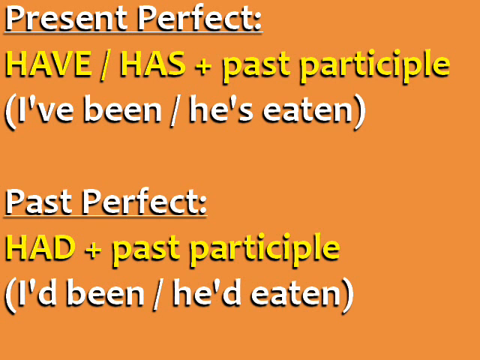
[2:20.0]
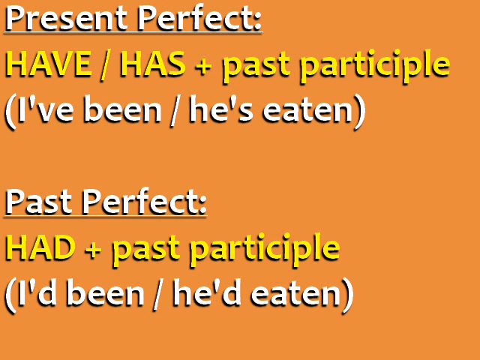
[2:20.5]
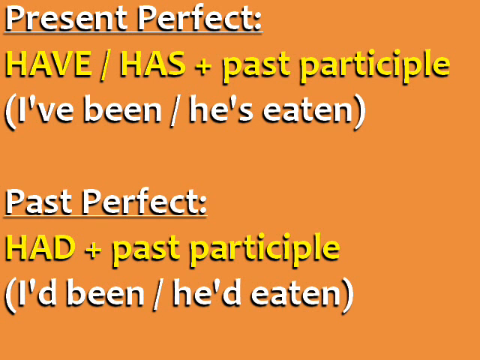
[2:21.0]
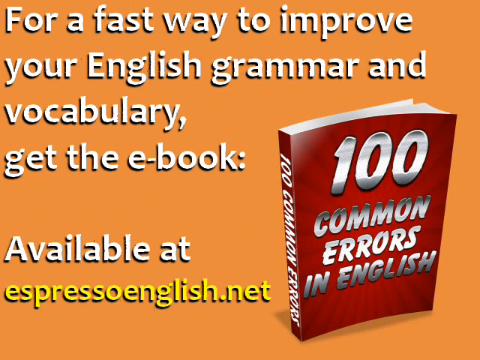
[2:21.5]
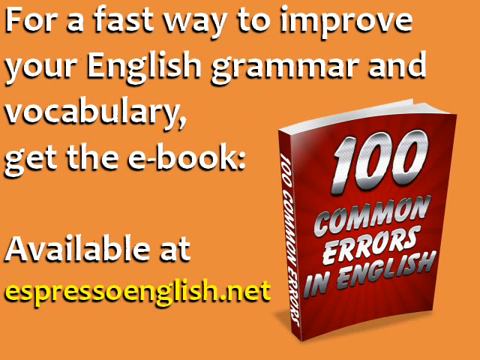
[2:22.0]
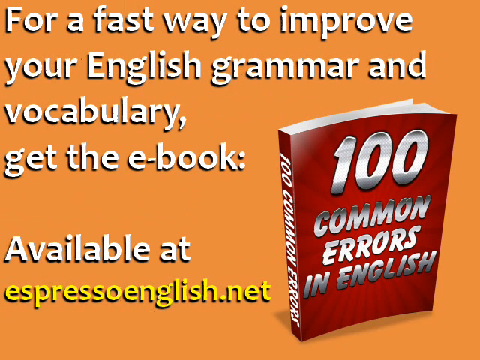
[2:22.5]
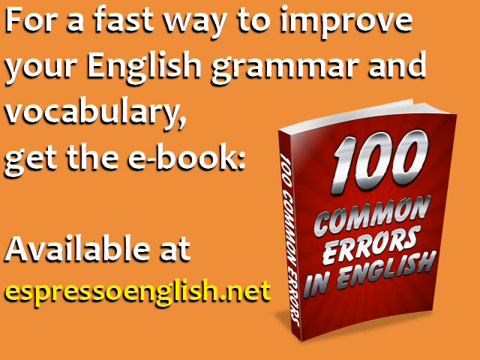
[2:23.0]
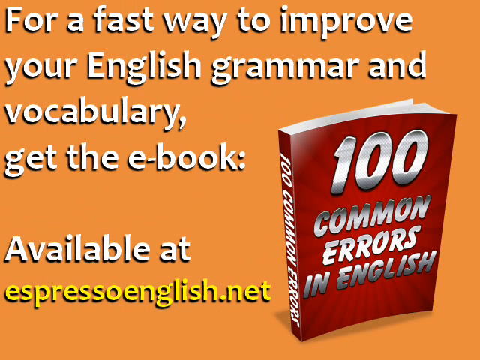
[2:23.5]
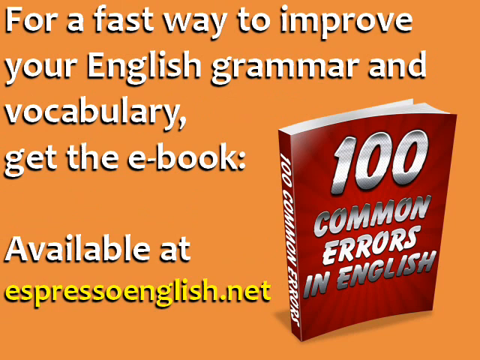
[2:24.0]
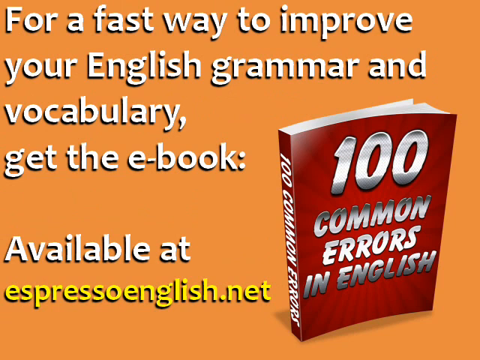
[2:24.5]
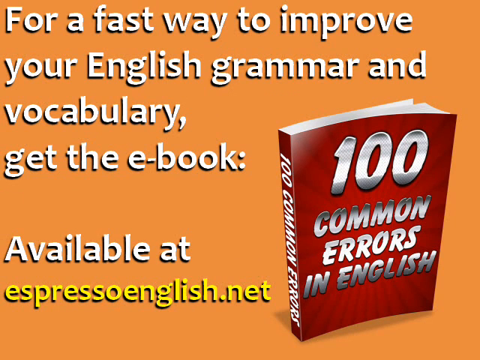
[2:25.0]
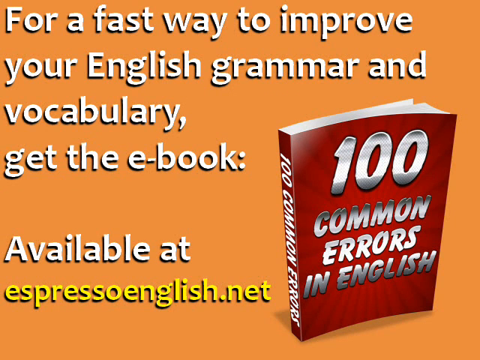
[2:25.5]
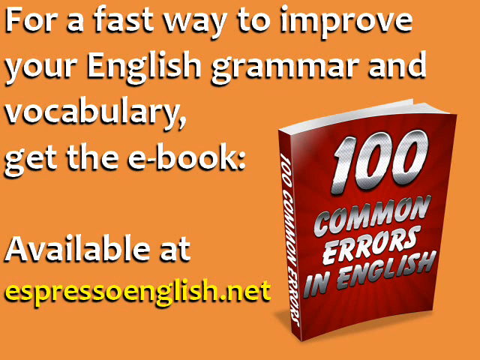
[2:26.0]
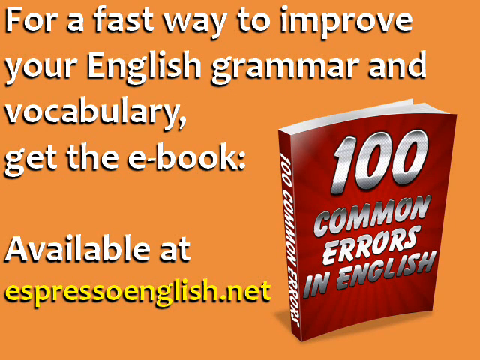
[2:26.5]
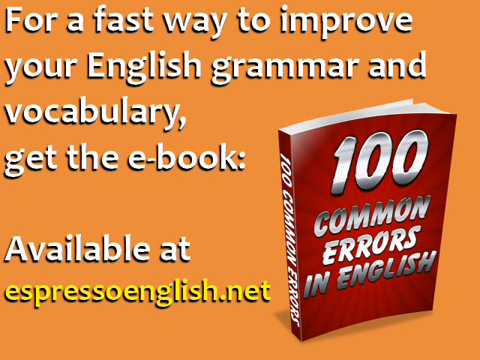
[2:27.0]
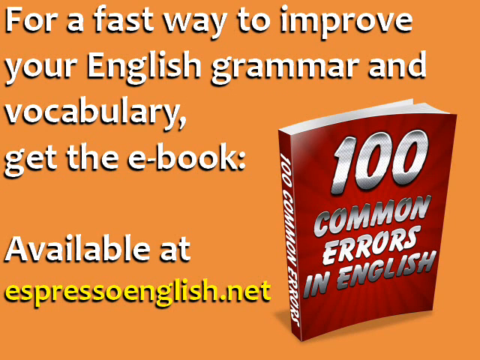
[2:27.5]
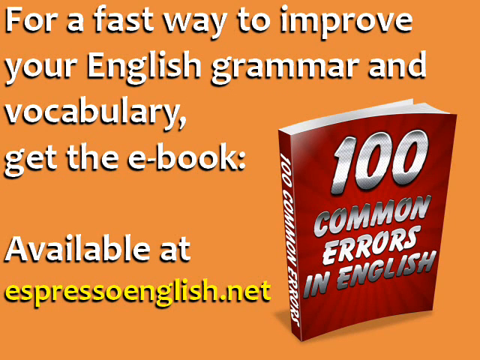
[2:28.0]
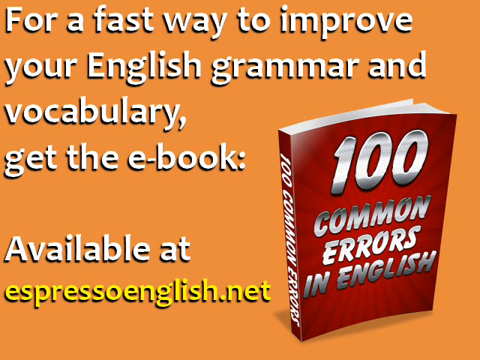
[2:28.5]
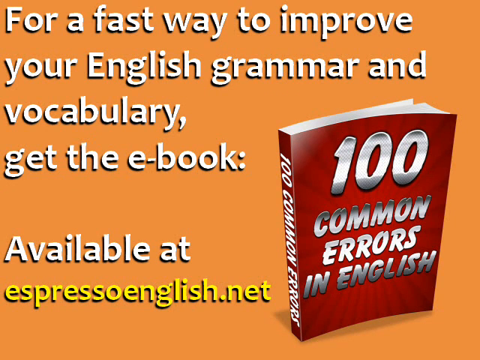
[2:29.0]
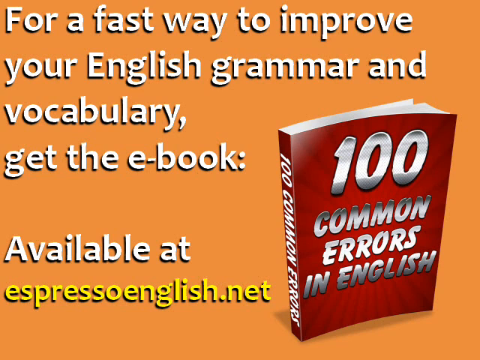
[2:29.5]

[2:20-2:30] After the tense examples, text appears, apparently an explanation, saying "for a fast way to improve your English grammar and vocabulary, get the e-book" and that it is available at "espressoenglish.net." The book is displayed with a red cover, and on top of it is written "100 common errors in English."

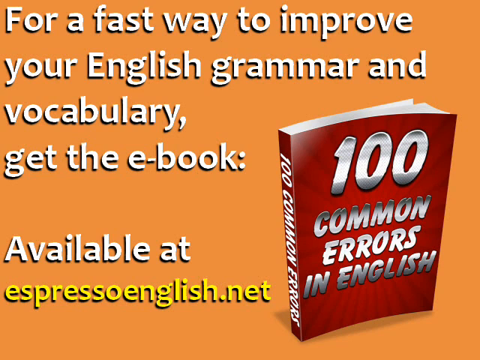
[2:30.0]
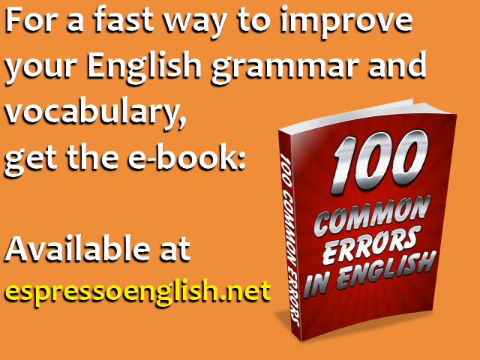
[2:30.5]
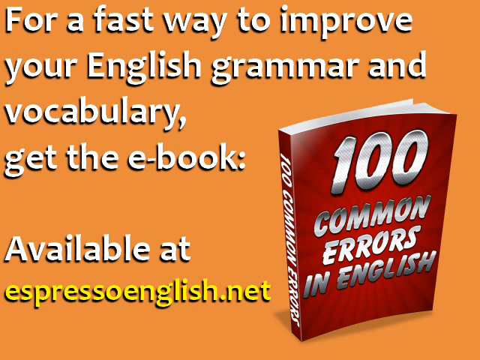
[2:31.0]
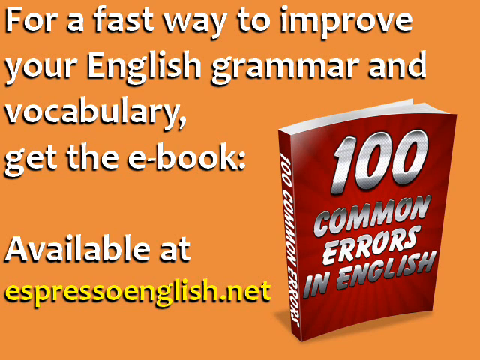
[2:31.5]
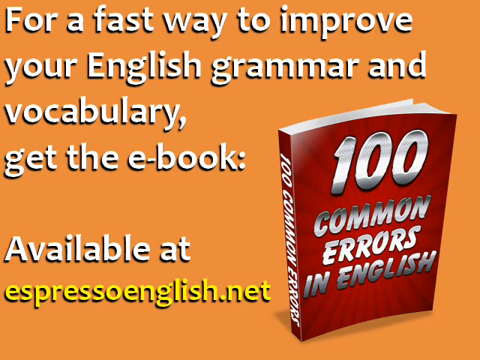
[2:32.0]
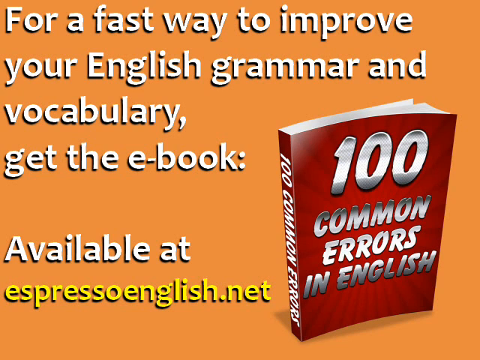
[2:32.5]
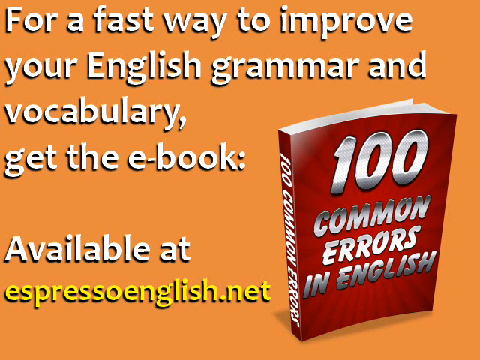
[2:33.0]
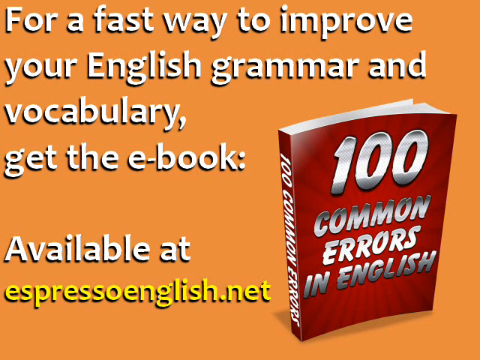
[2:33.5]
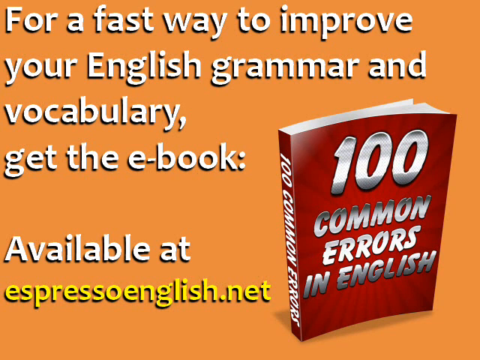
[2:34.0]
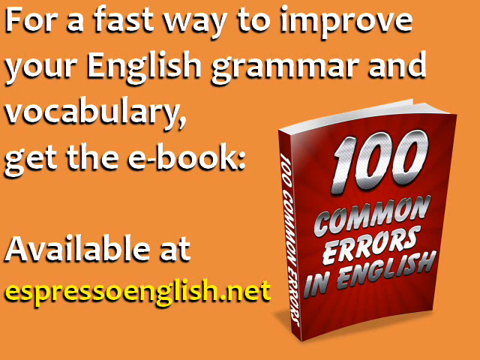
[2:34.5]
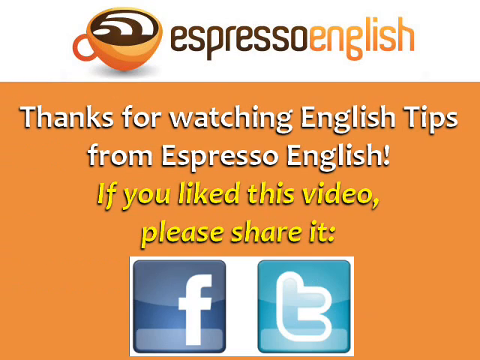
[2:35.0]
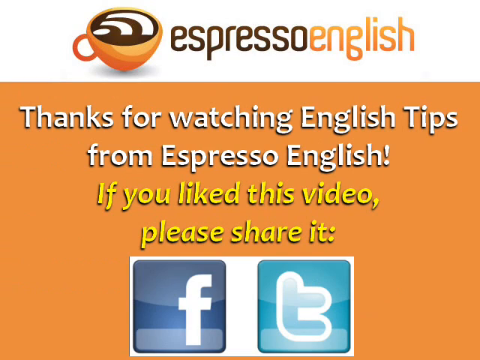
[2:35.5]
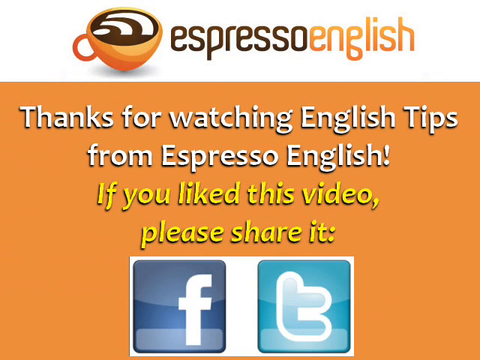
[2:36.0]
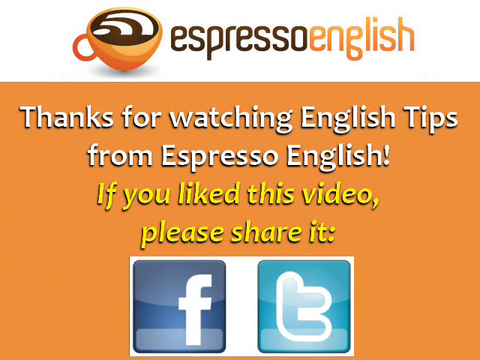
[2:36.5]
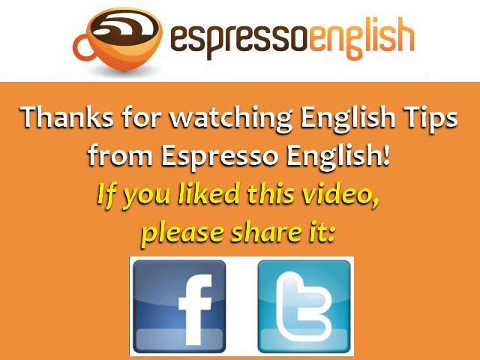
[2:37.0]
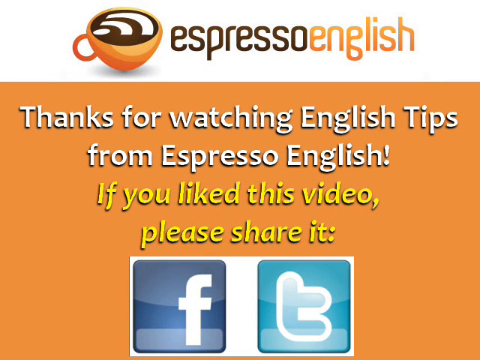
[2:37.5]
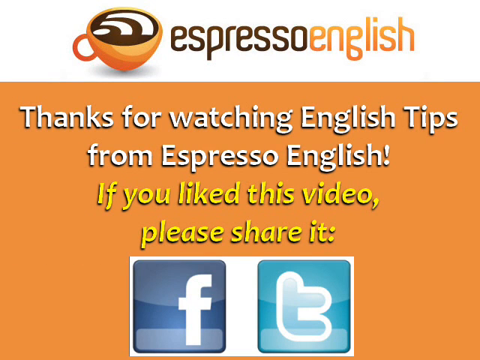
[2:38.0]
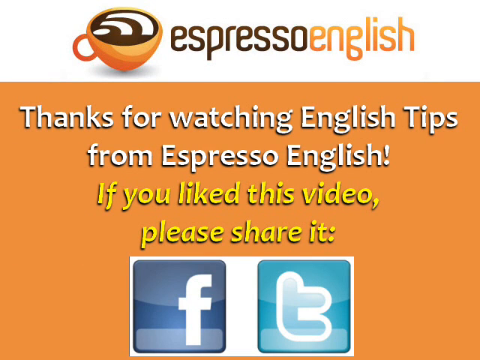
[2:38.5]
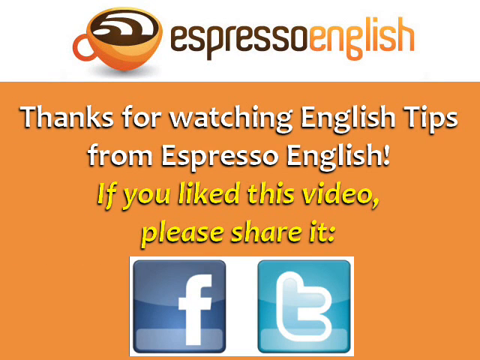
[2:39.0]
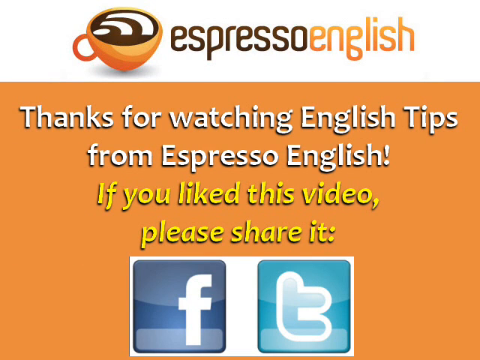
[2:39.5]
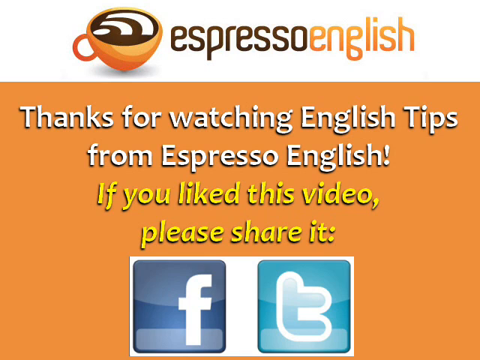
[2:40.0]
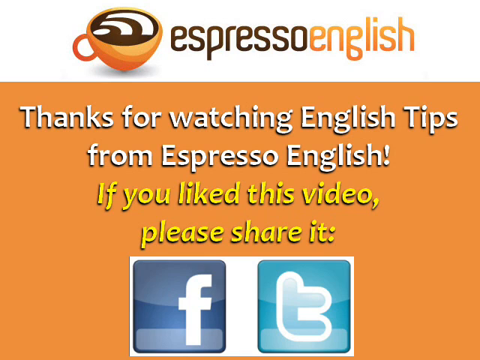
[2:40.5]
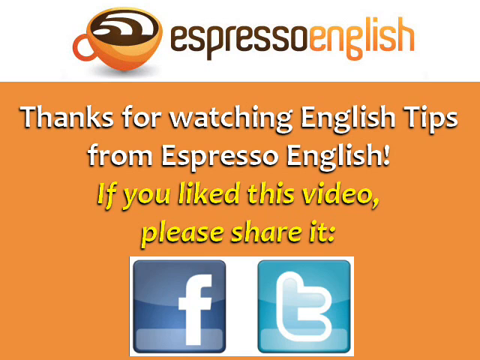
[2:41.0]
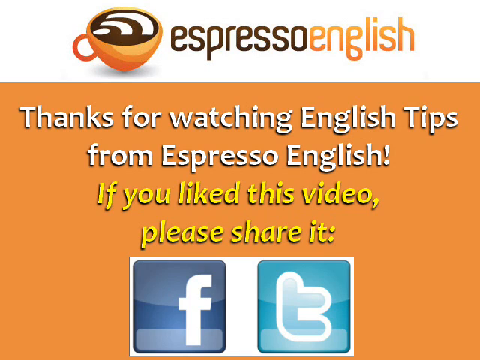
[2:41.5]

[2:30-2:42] Instructions say "for a fast way to improve your English grammar and vocabulary, get the e-book," and state that the e-books are available at "espressoenglish.net." A red book is shown with the title "100 common errors in English." The video then thanks viewers for watching and shows Espresso English with an image of a cup containing coffee or possibly cocoa. It asks viewers for tips from Espresso English and asks them to like the video and share it on Facebook and Twitter, with Facebook and Twitter logos shown. "www.espressoenglish.com" appears.